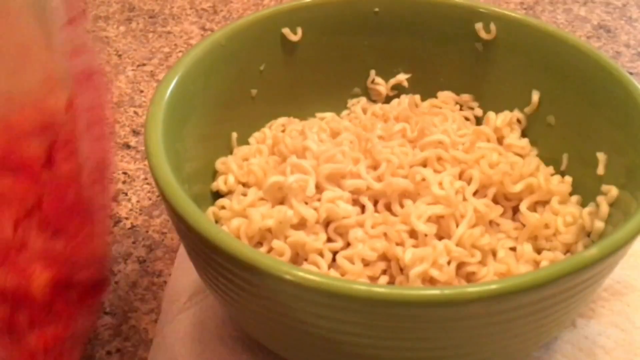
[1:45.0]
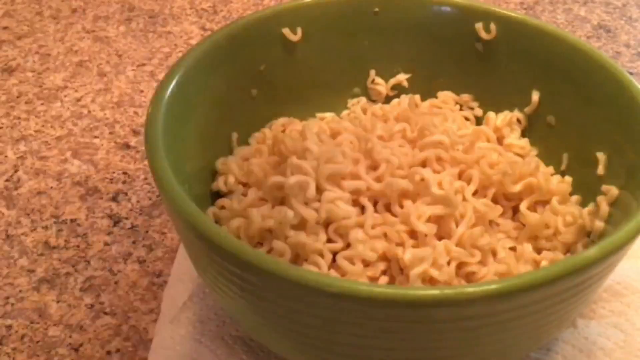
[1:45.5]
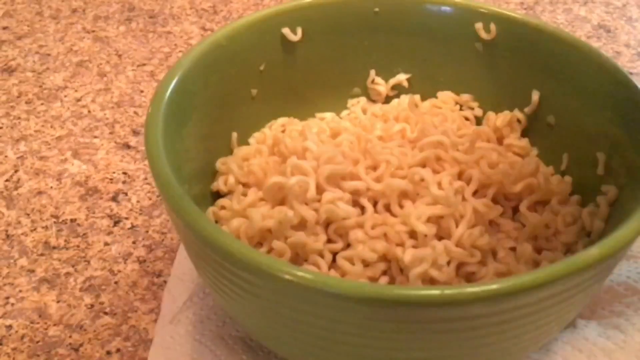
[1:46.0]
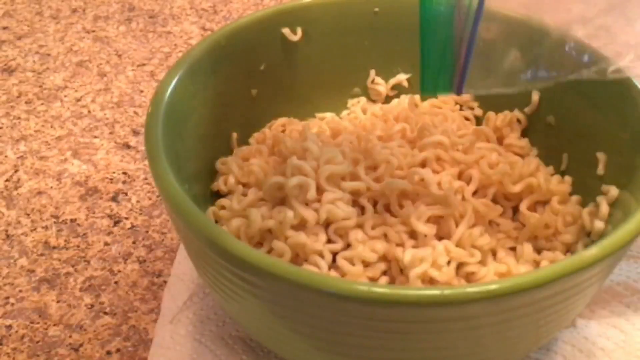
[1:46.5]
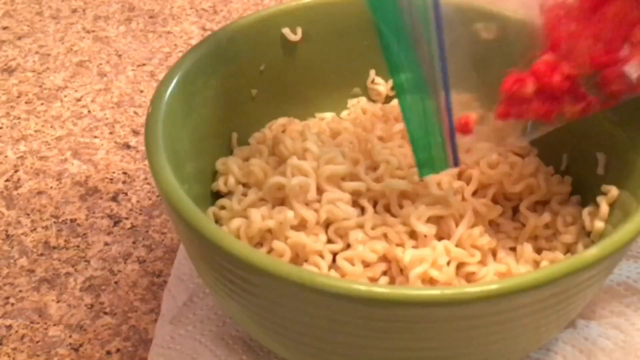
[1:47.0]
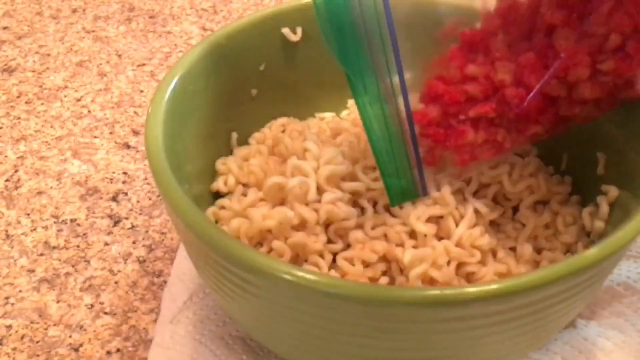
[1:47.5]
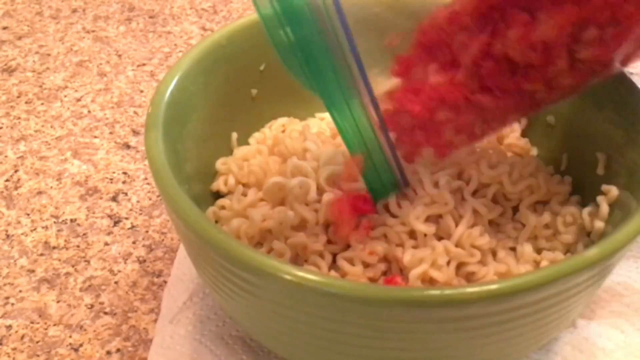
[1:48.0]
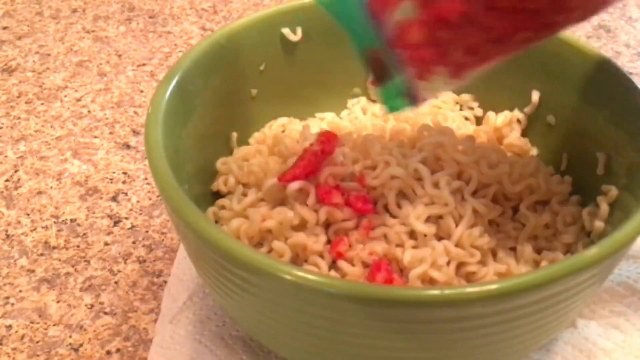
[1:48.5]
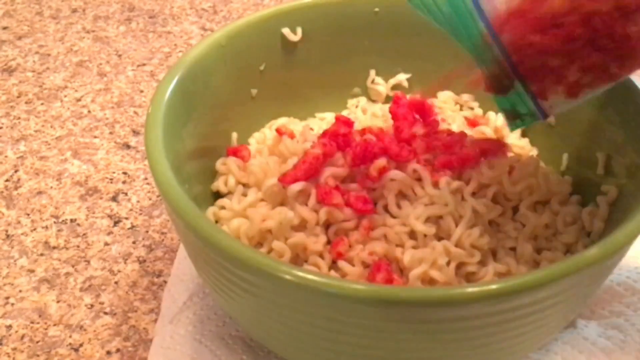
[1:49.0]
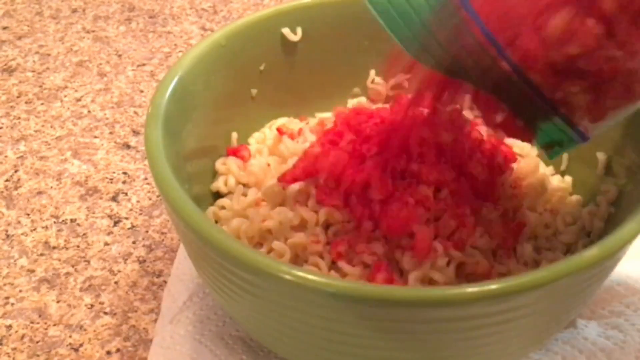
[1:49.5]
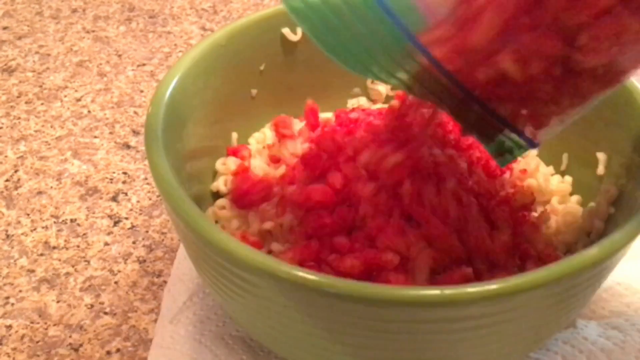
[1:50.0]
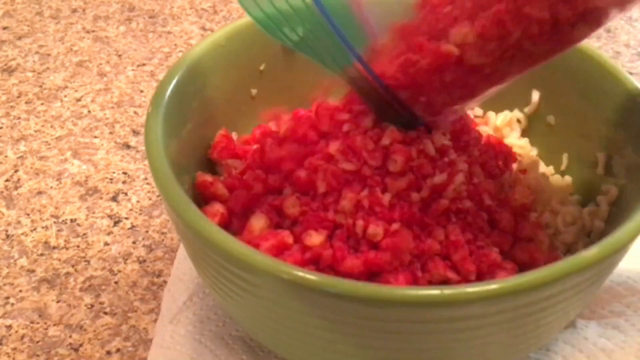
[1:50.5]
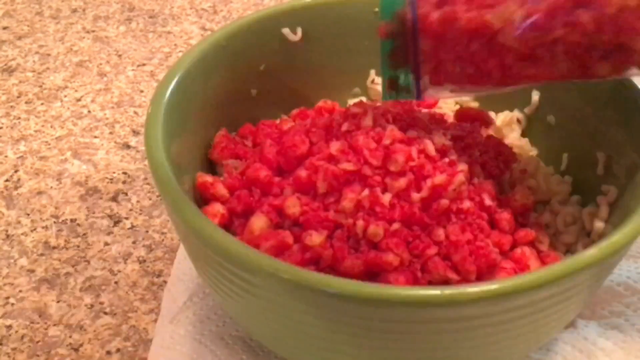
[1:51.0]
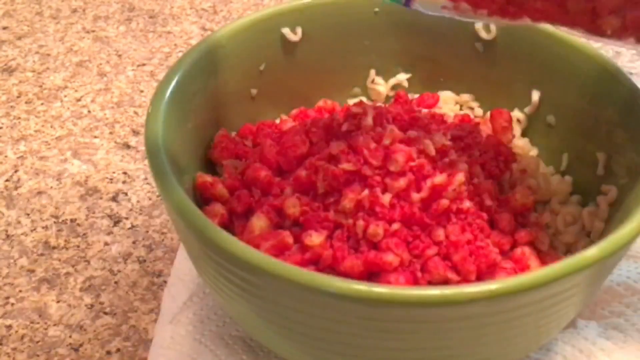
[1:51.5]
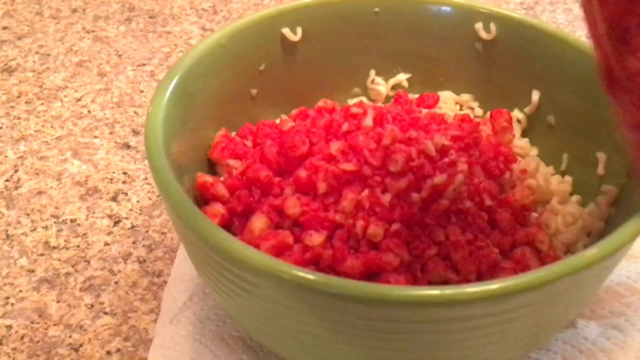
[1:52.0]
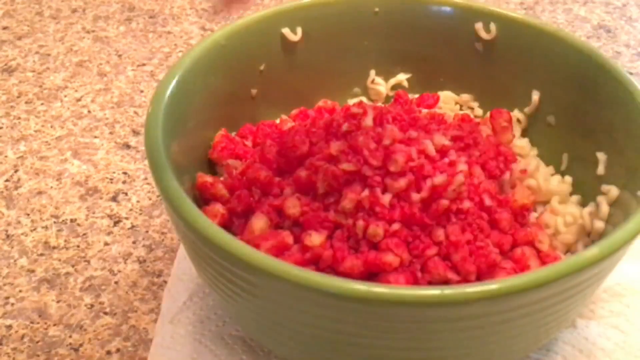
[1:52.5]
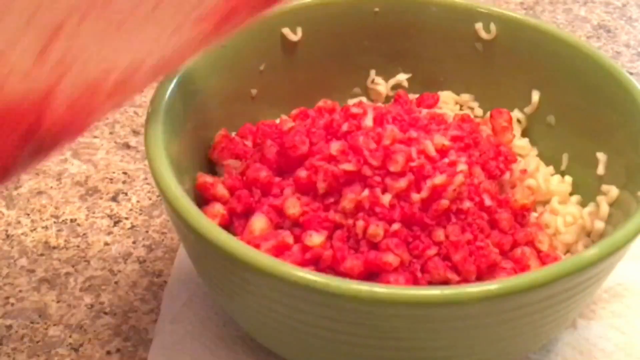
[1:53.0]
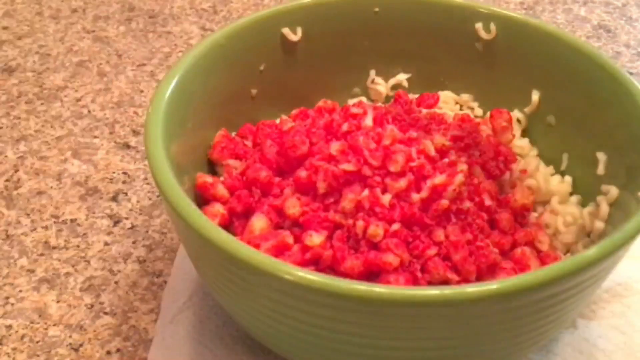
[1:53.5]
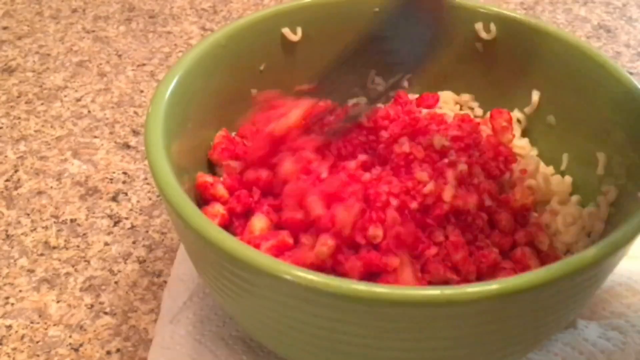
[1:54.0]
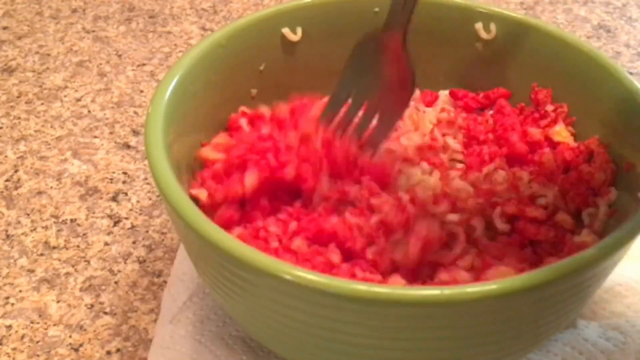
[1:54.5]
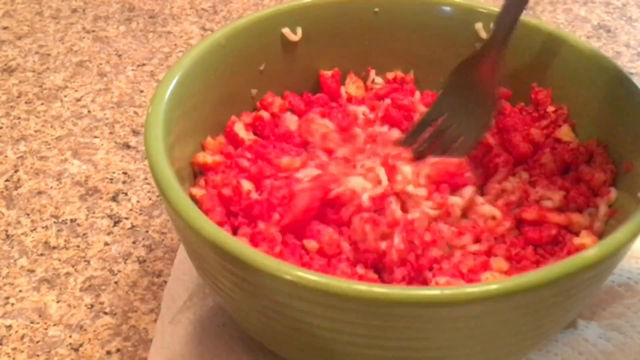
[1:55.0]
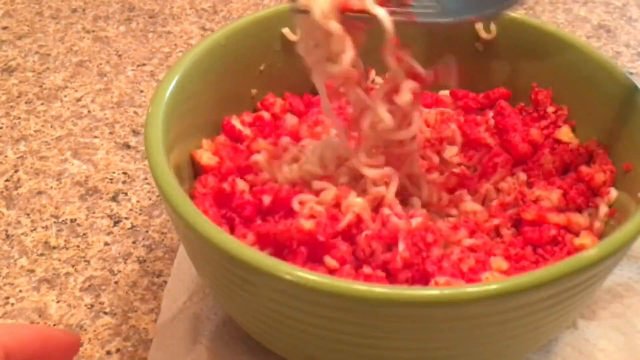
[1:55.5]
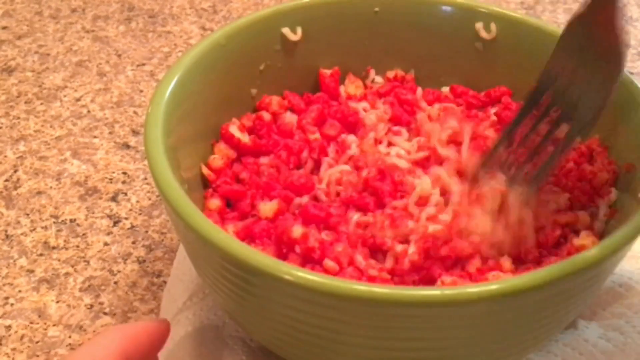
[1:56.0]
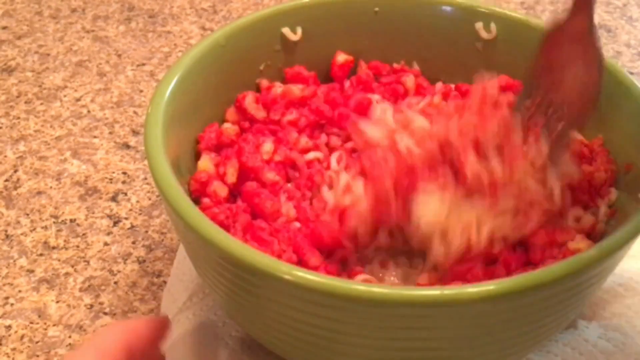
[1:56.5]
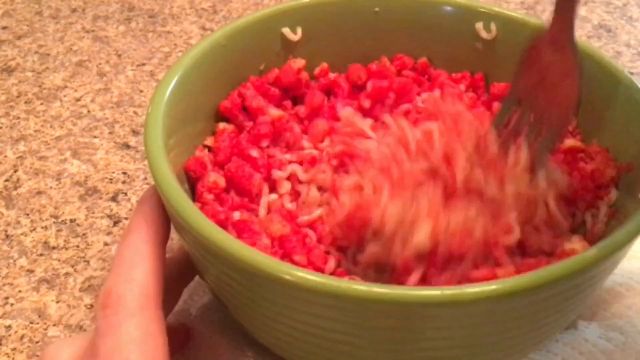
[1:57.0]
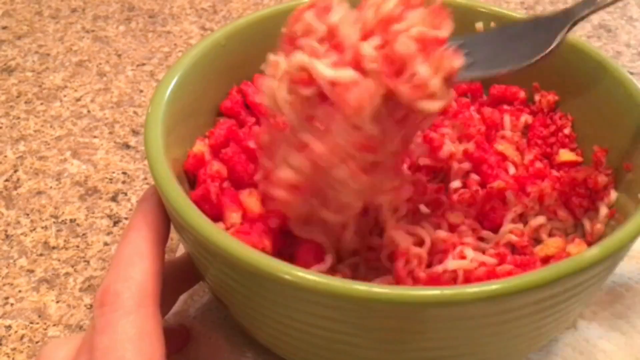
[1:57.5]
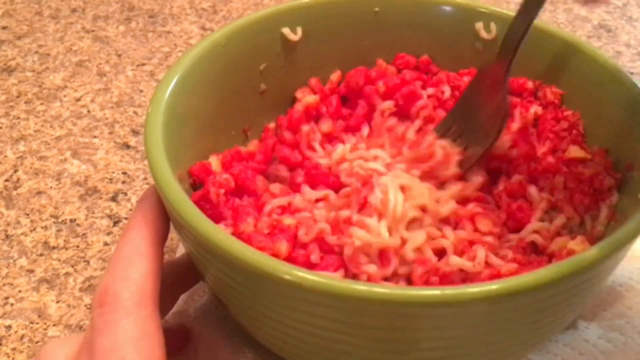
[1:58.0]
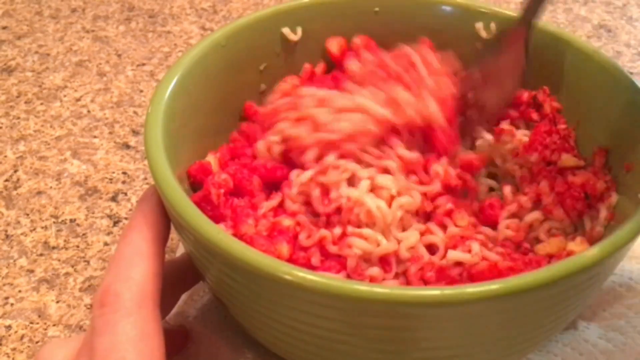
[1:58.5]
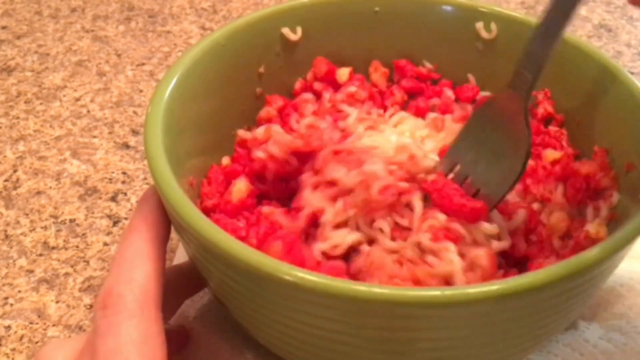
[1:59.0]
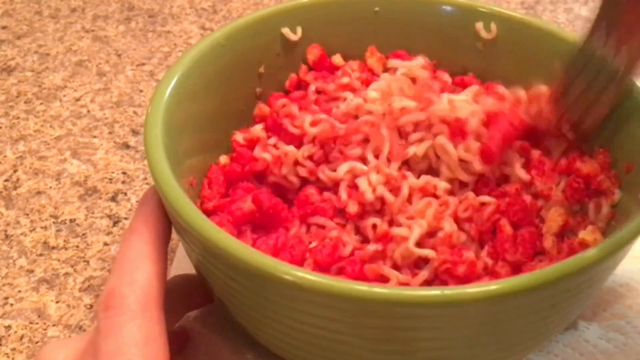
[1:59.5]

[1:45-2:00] A green ceramic bowl is on one white sheet of paper towel on a brown speckled granite countertop. The contents of the sandwich baggie, pulled from the left-hand side of the bowl, are shown; the bag appears to be opened. The person does not use the entire contents of the bag and puts it to the left-hand side of the bowl, out of sight of the camera. The bowl now contains the cooked ramen noodles and the smashed flaming red hot Cheetos. The person picks up a fork and mixes the ramen noodles and Cheetos together in the bowl, then places their left hand on the bowl.